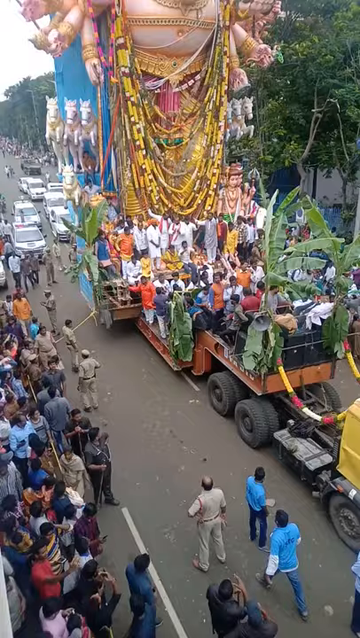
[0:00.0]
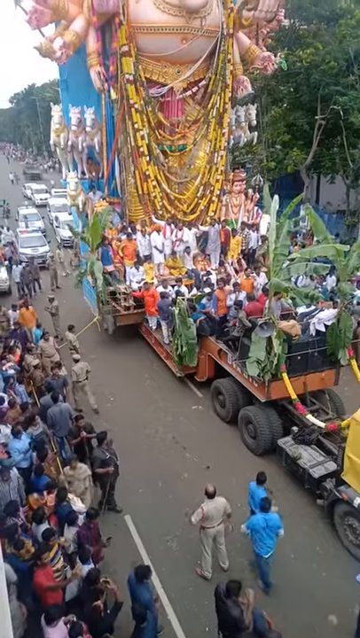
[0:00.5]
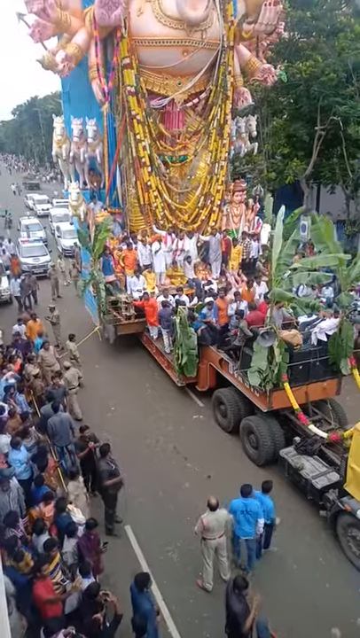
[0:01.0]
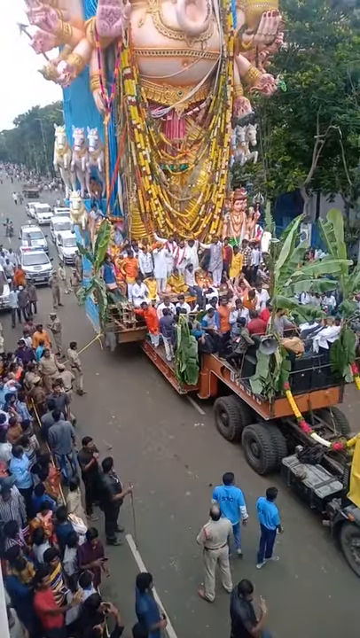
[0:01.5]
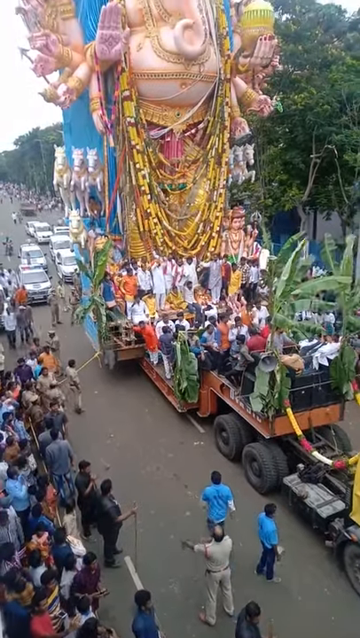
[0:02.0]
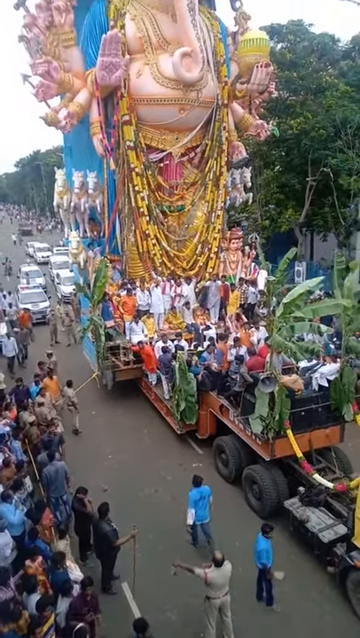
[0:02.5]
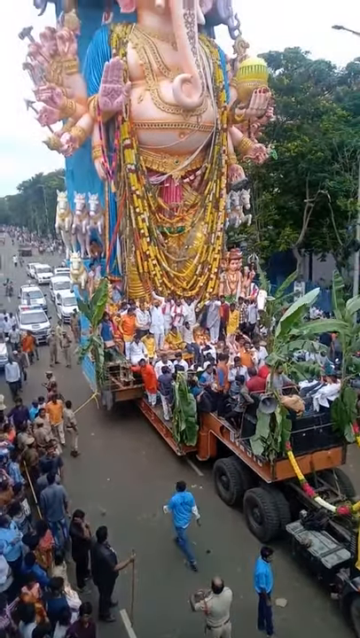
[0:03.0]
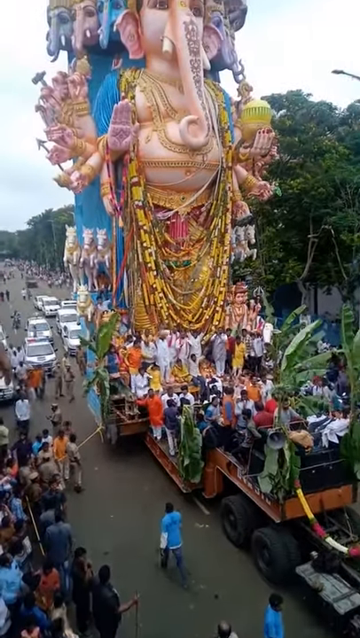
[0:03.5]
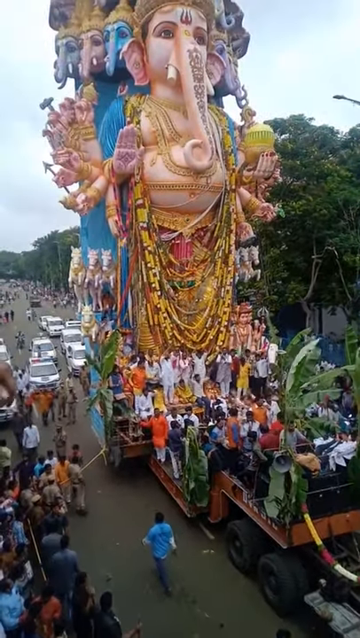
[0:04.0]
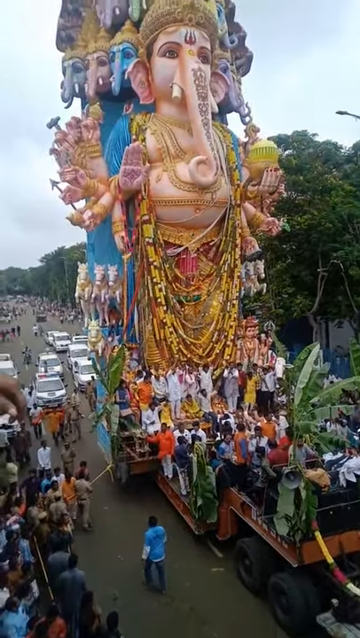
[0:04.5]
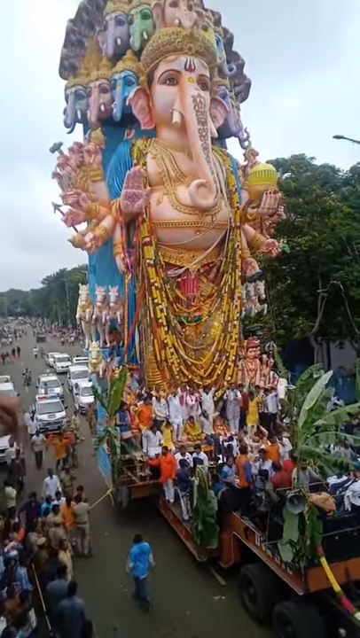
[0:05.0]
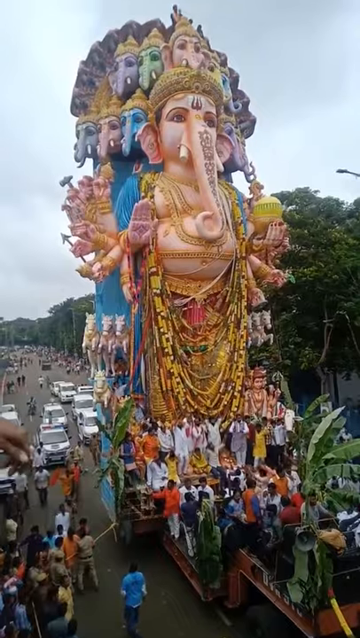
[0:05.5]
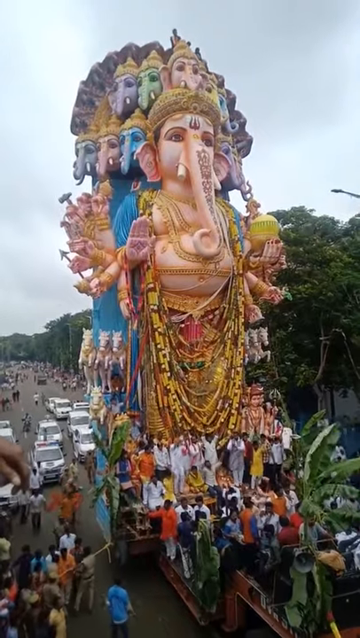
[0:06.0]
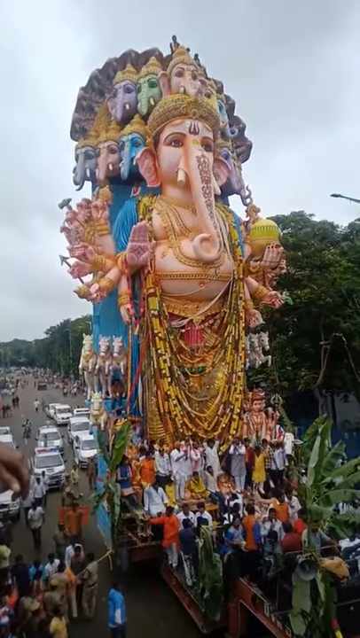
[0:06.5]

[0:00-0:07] Vertical video footage, probably taken with a phone camera, looks down from a fairly high vantage point at what appears to be a parade. A giant parade float is roughly in the center of the image, and the camera slowly pans upwards to take in the whole float. The float appears to depict some kind of elephant-human creature, possibly a god from some unidentified religion: a humanoid-type body with elephant tusks and an elephant nose. Several other elephant heads apparently rise behind the main head of the float. What look like people are standing around looking at the float, and there are some cars behind it as well. Green trees are on the right-hand side. The sky looks fairly light colored, suggesting it is daytime. What looks like a truck is pulling the float, with some palm tree leaves attached to it. Some people are walking around beside the float, and there also seem to be people off in the distance.